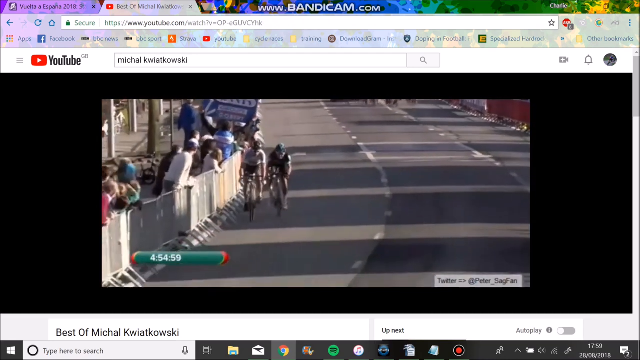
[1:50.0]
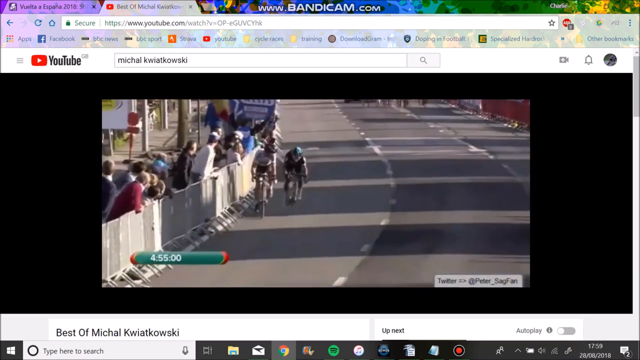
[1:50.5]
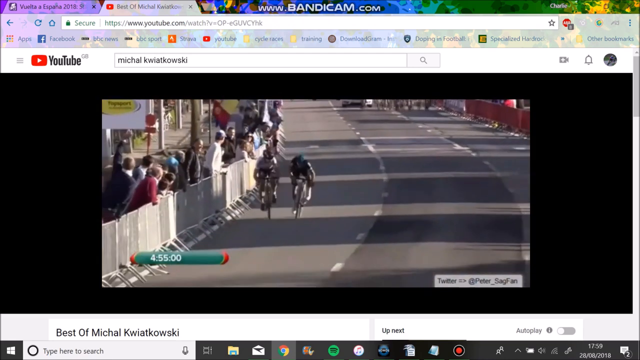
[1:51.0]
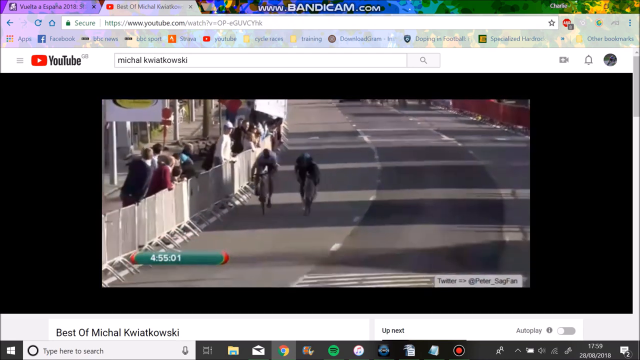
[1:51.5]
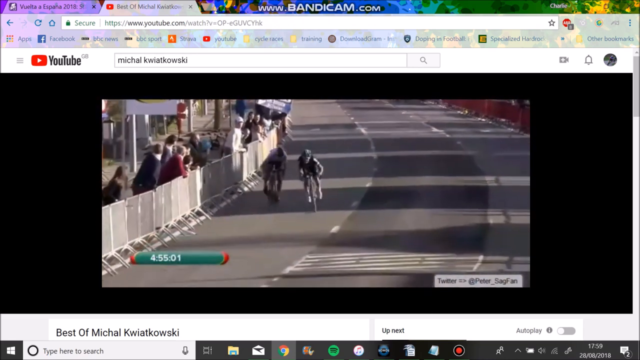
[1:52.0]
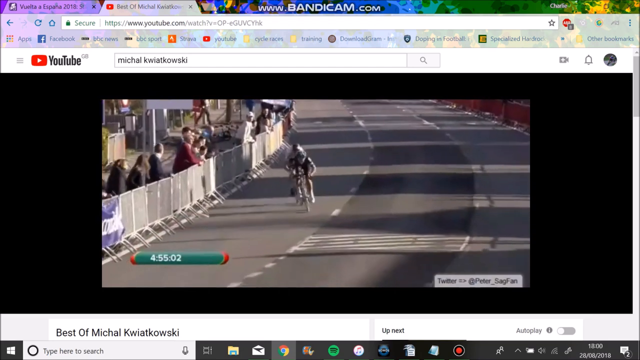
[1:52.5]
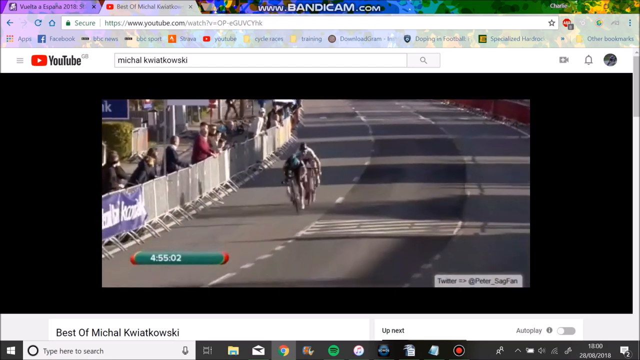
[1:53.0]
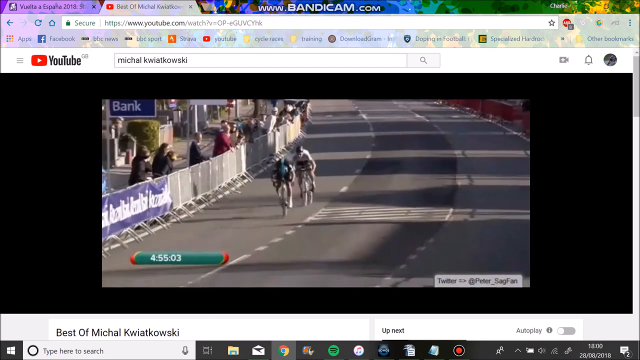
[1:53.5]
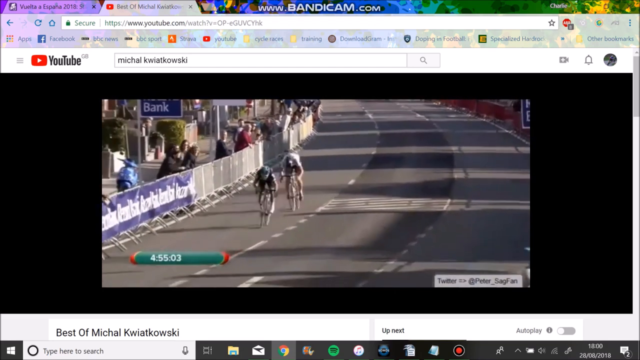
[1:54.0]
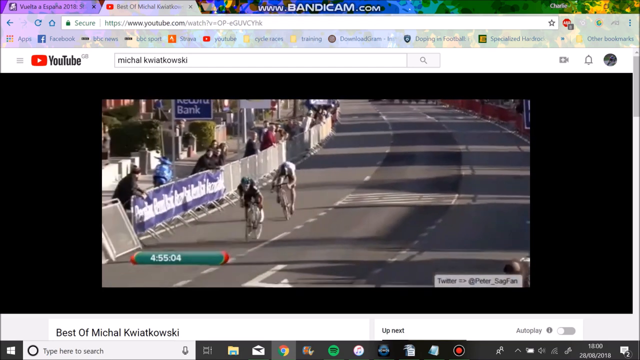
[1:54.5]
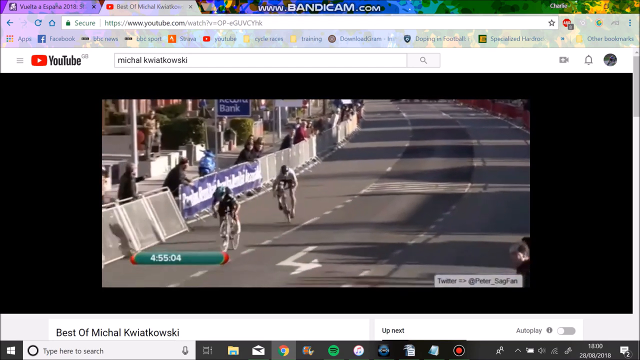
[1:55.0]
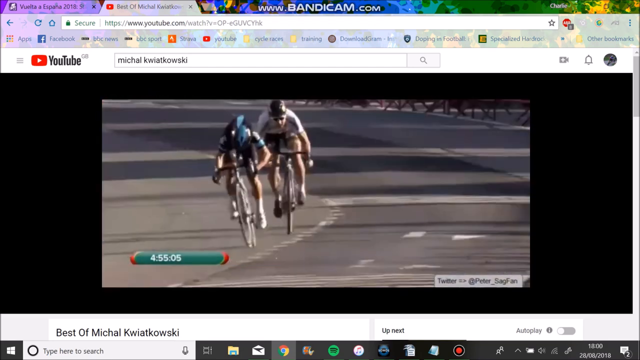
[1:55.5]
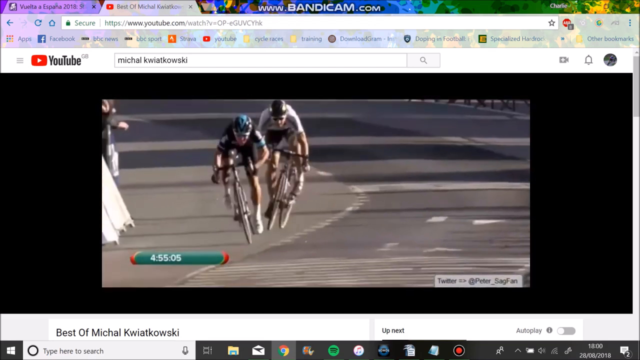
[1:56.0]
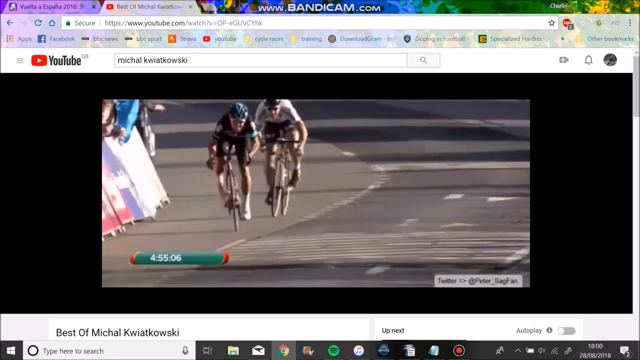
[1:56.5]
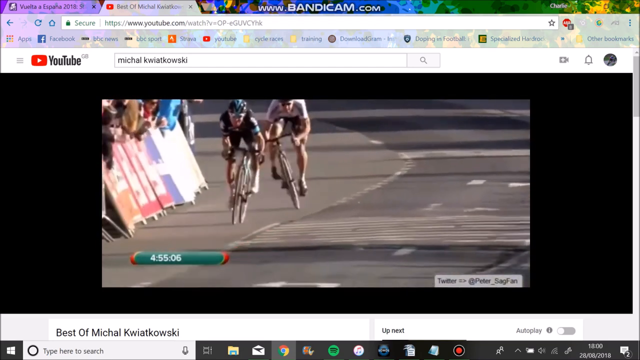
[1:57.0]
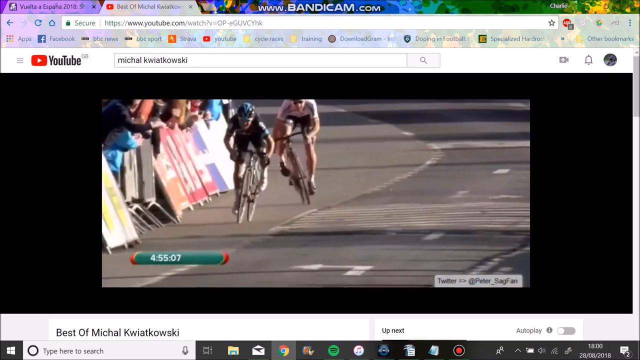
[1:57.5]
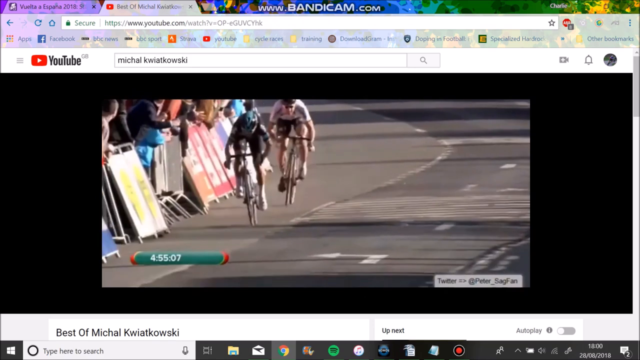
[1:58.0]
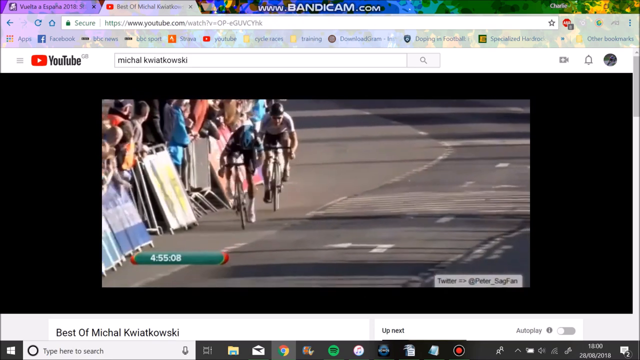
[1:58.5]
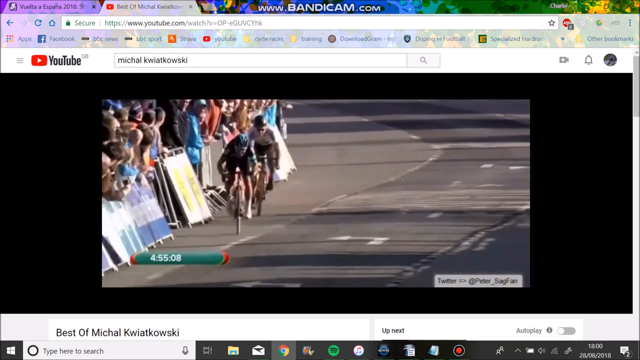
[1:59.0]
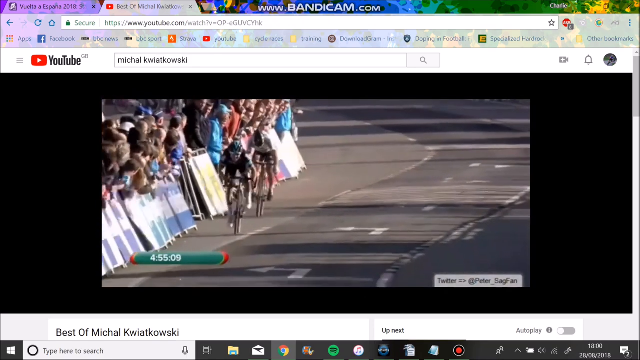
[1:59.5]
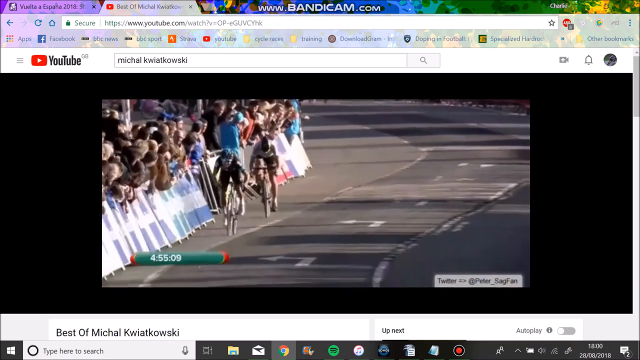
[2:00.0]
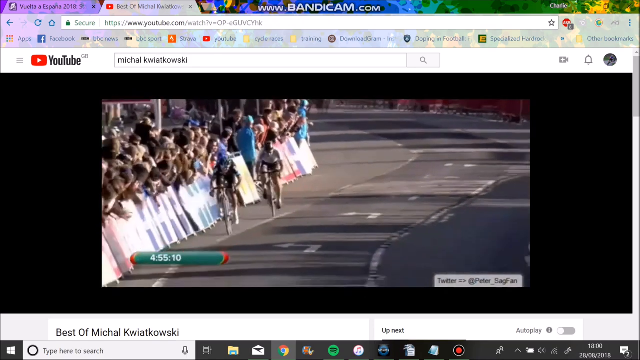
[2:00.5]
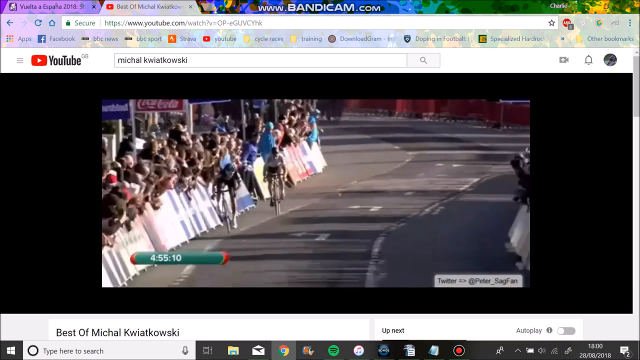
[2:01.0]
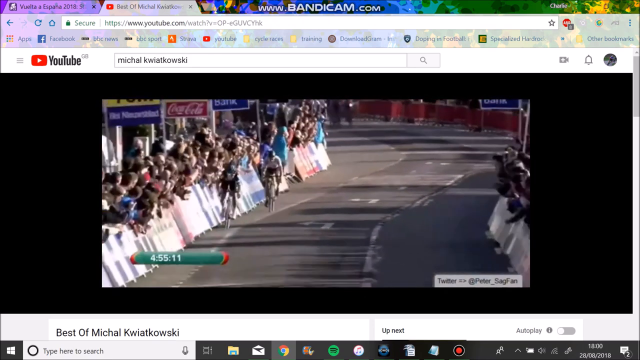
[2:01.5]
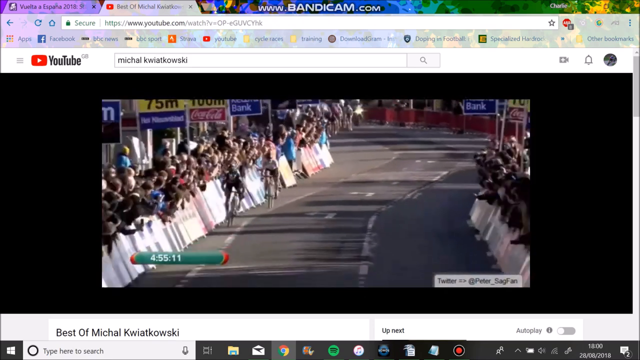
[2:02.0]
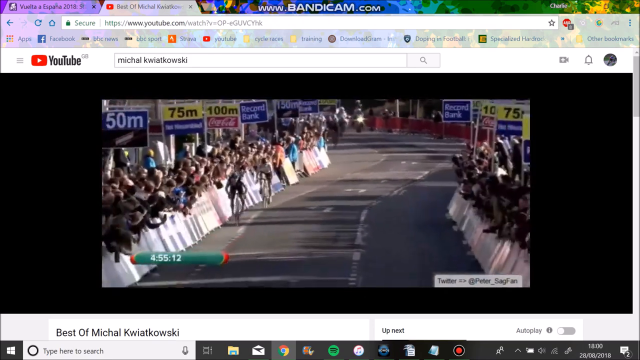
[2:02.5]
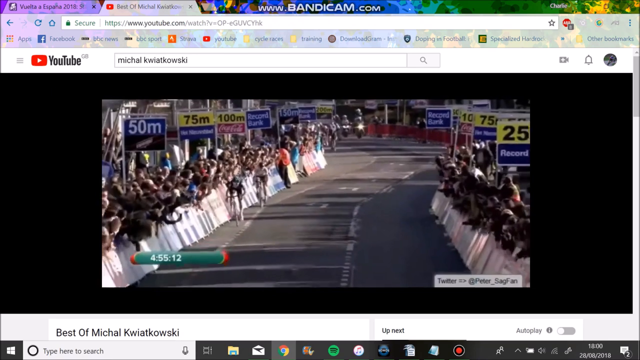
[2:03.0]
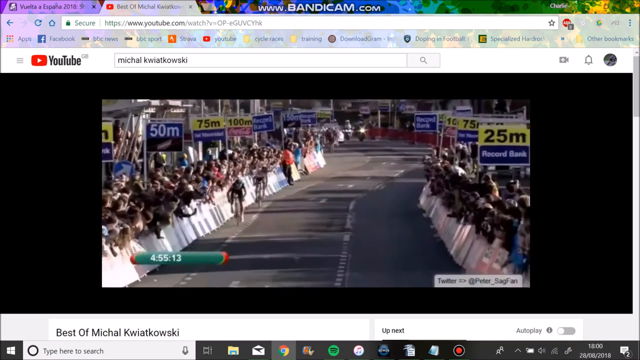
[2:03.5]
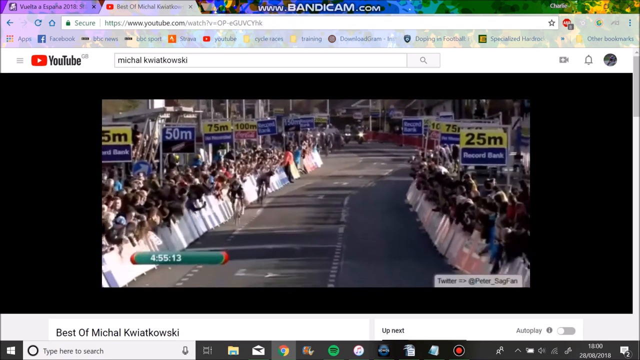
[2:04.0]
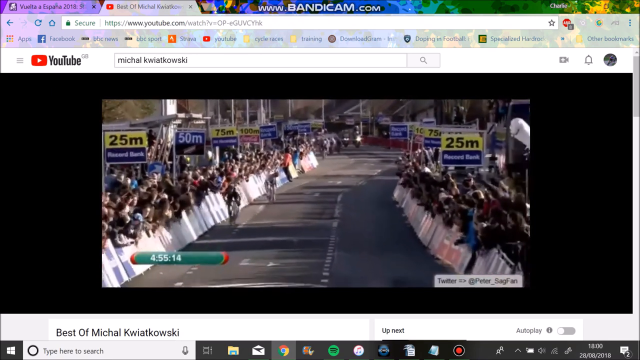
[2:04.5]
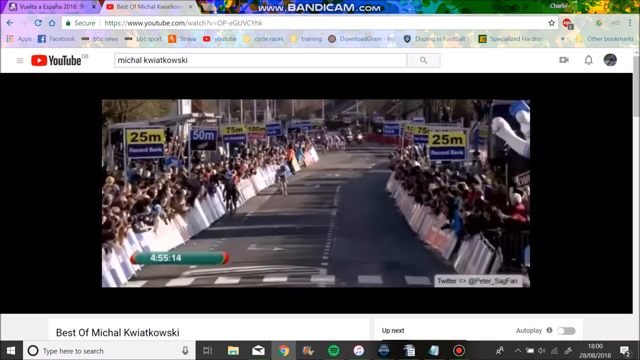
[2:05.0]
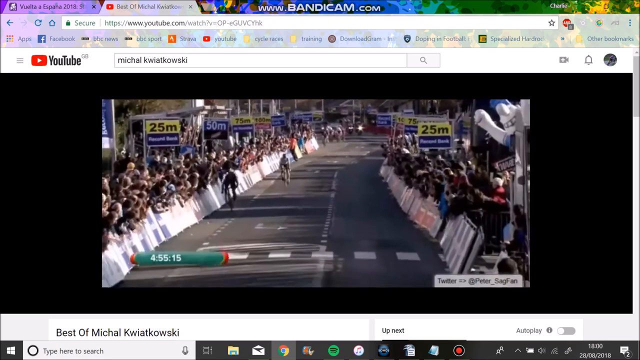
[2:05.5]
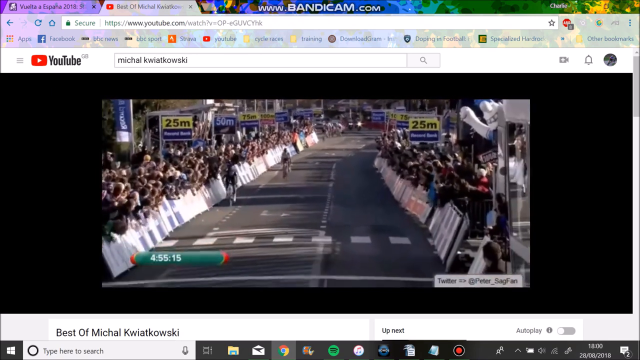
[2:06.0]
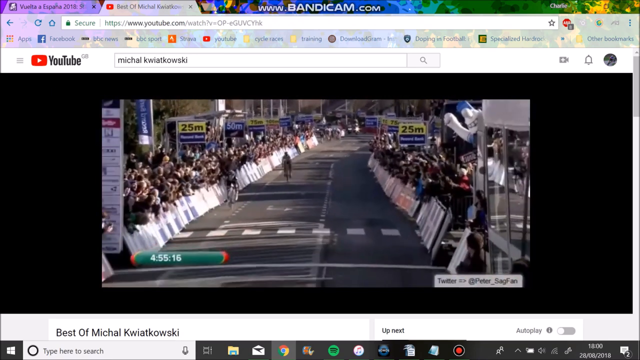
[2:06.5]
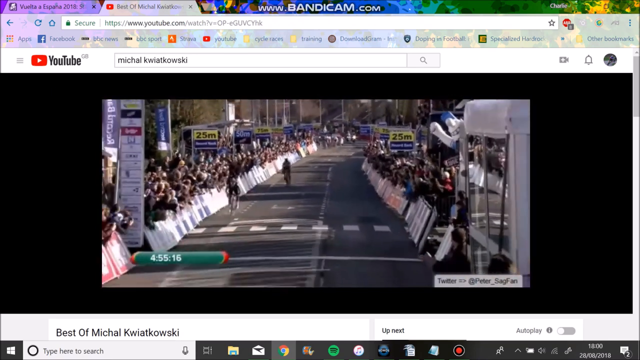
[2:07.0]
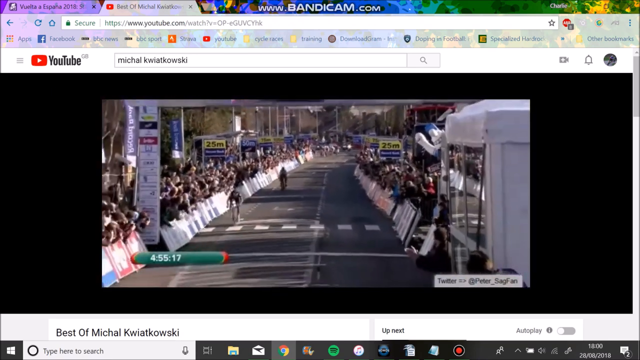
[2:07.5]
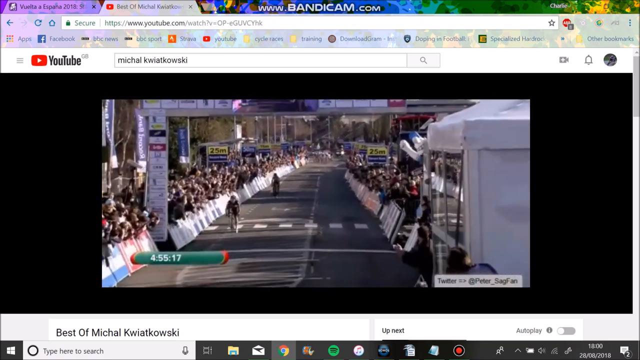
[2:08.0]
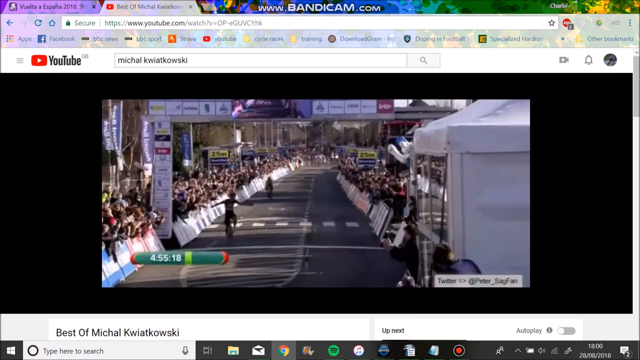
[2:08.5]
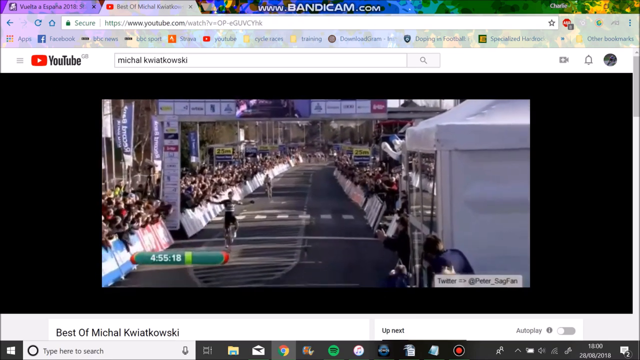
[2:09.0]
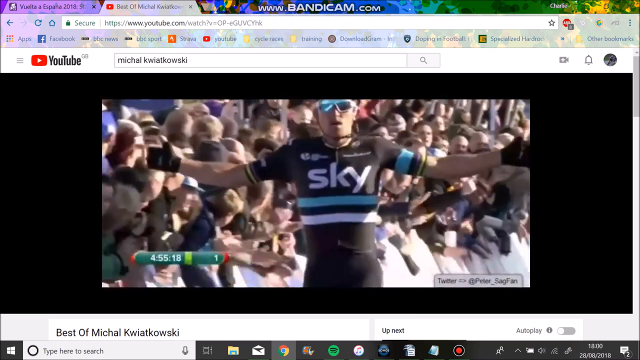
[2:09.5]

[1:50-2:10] In the YouTube video two cyclists, one in black and one in white, both wearing helmets, ride one behind the other while a large group of competitors follows behind them. Fans on the side across the gate cheer them on. A large crowd is shown, and numbers at the top behind the crowd show the distance left: 150, 100, 75, 50. People slam their hands against the gates as the rider in white slows down and gives up, and the rider in black crosses the finish line far ahead and puts his arms up. The black uniform has the word "sky" on it. Below the video the page reads "best of Michael Kwiatkowski", with Spotify and iTunes symbols beneath, and tabs are open at the bottom of the screen.